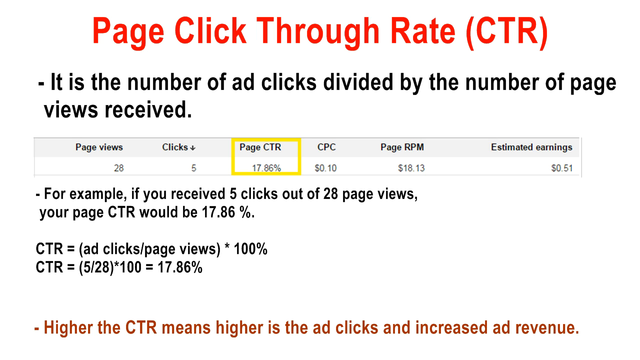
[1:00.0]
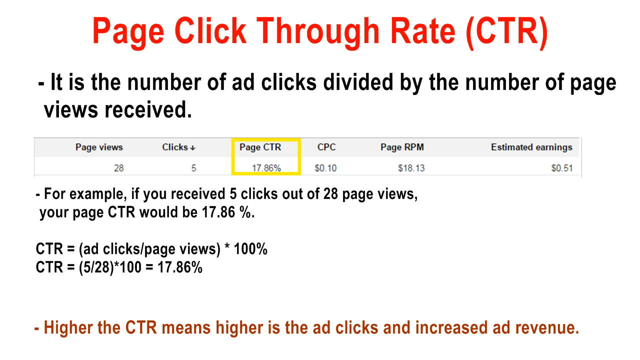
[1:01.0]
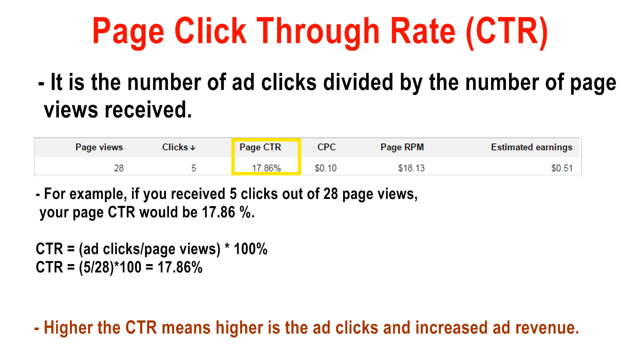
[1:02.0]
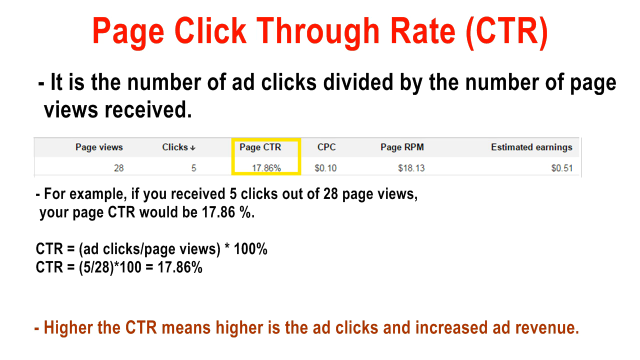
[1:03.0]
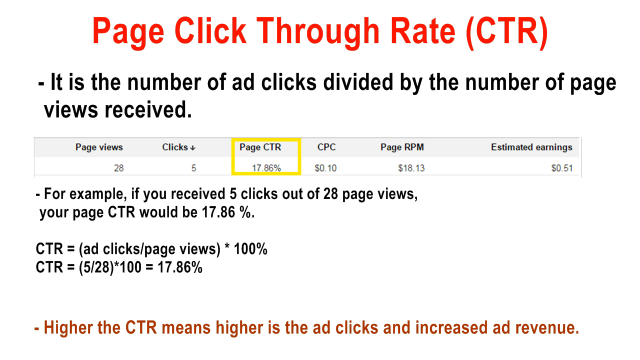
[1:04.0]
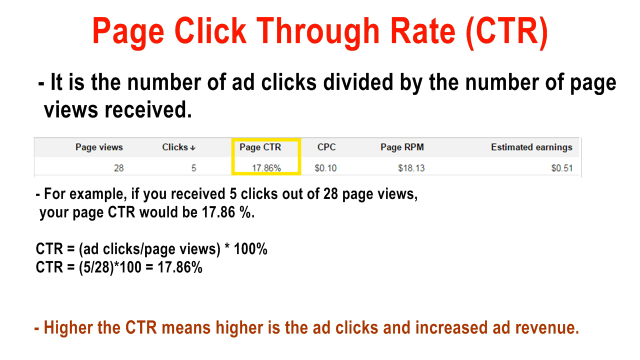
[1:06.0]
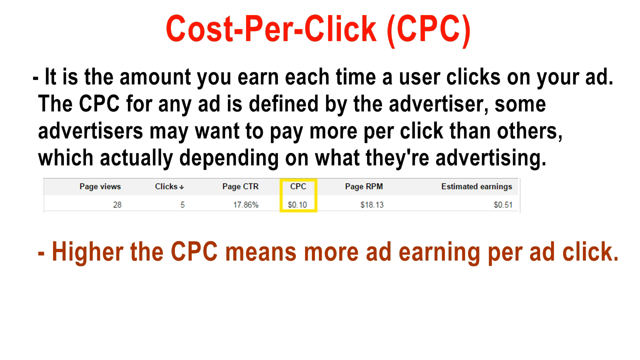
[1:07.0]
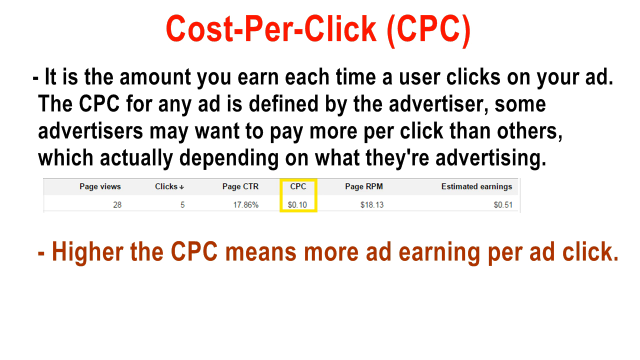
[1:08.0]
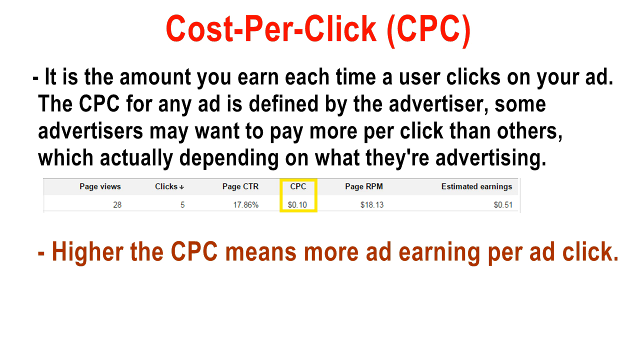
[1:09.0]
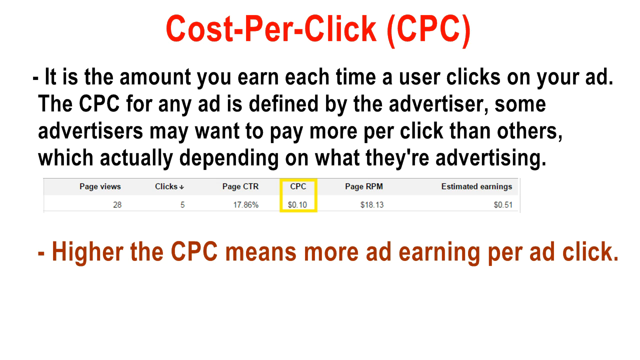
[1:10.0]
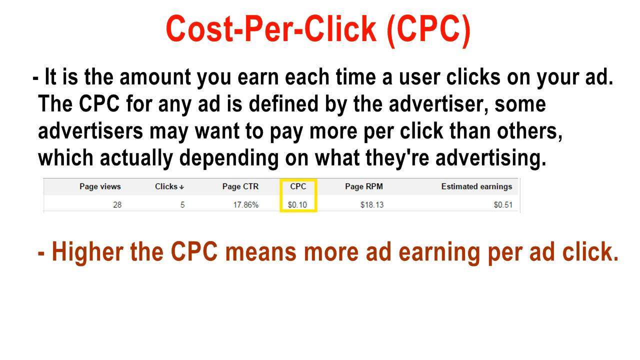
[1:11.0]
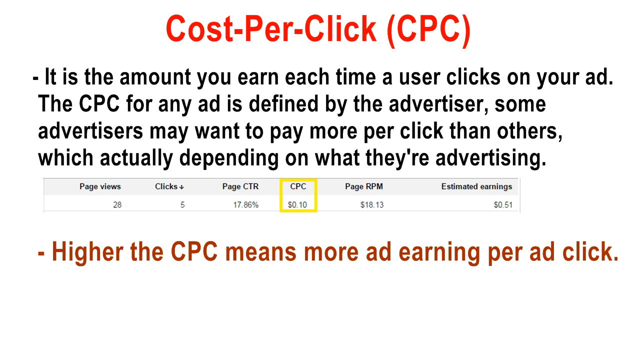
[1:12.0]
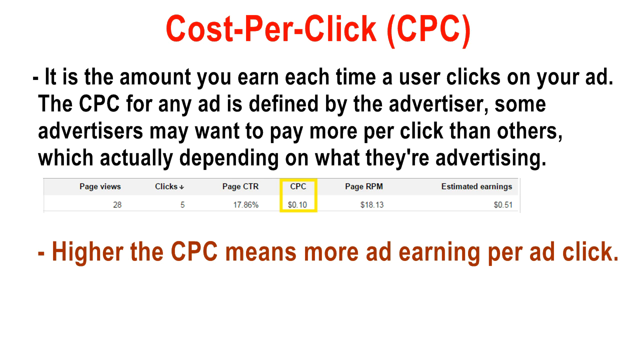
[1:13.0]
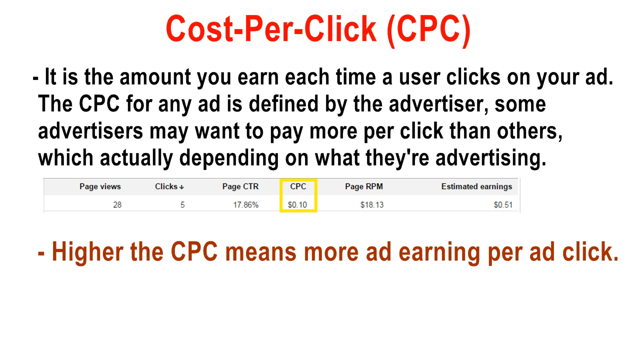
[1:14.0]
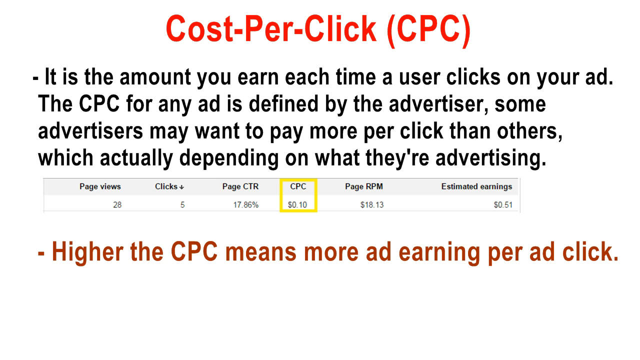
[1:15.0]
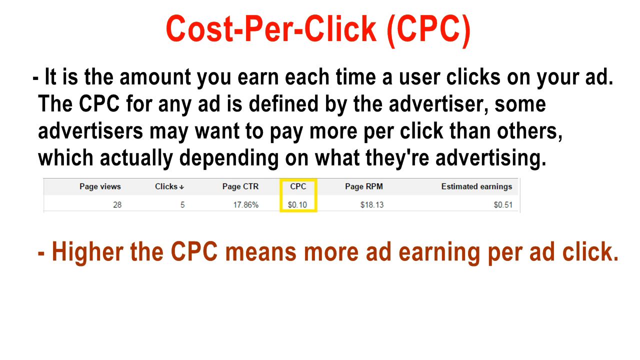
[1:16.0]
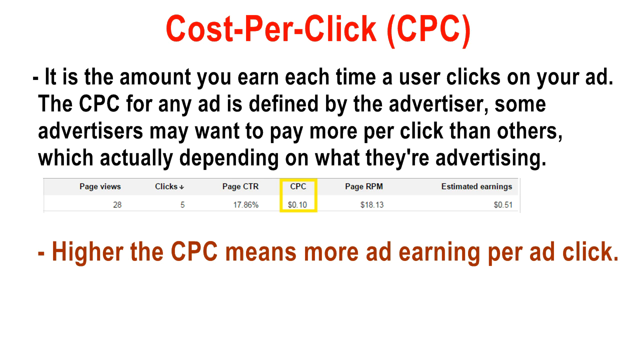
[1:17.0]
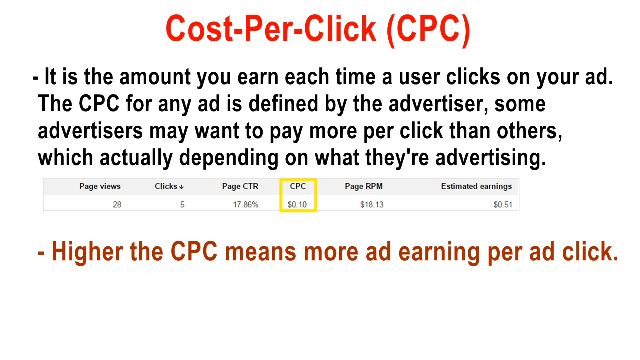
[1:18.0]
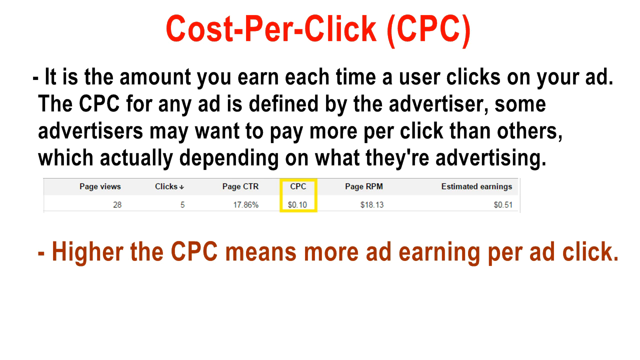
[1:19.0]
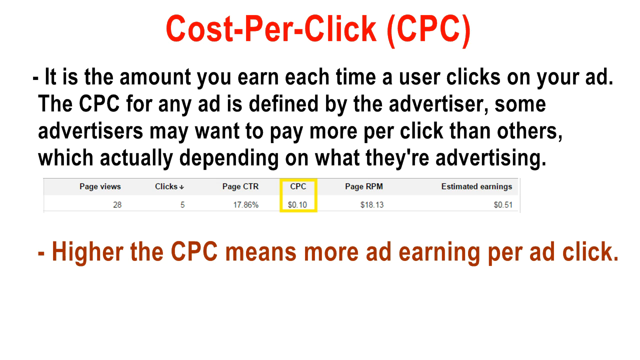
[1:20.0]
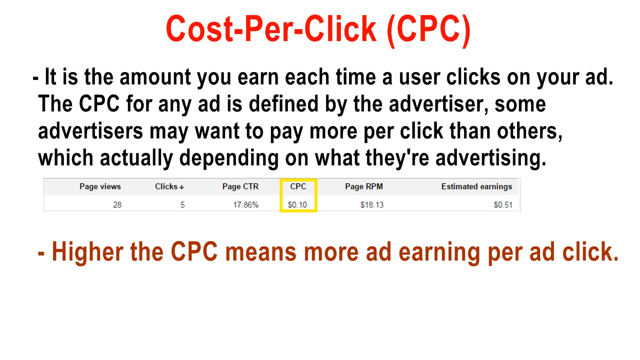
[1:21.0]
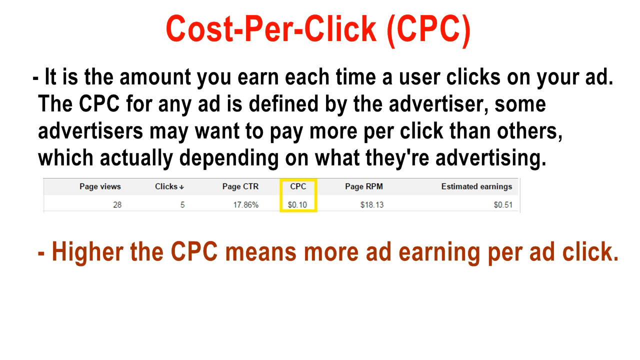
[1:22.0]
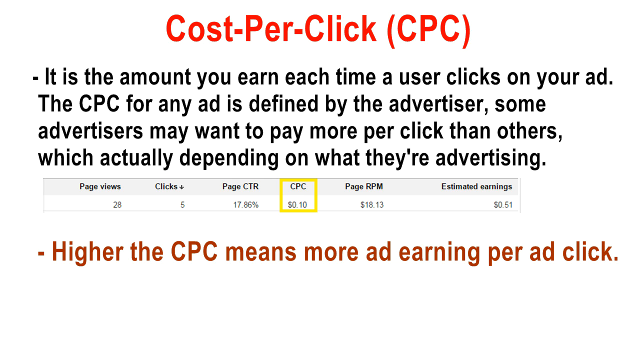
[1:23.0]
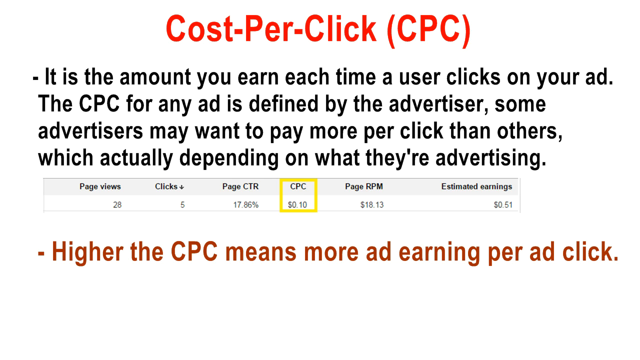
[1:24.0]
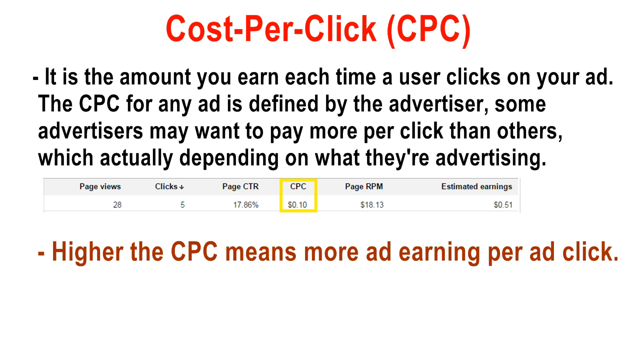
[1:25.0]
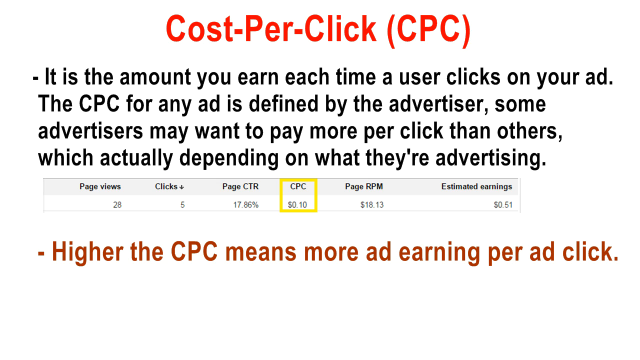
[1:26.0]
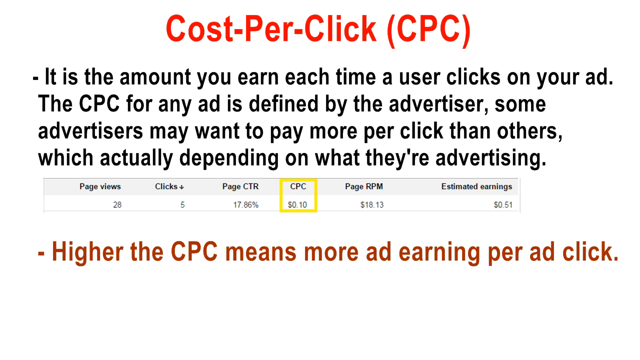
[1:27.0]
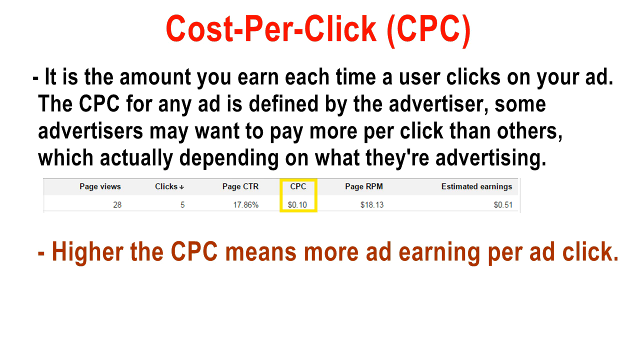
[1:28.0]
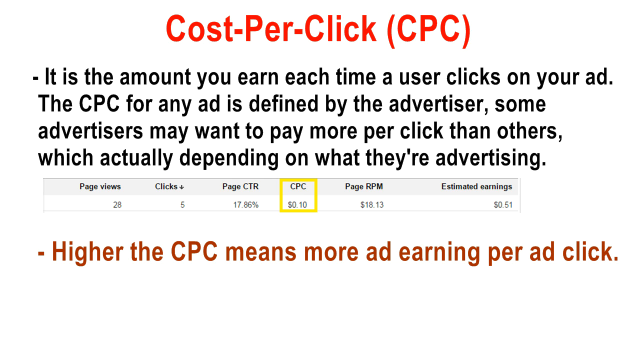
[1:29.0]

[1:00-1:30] The screen shows the page click-through rate, then moves to cost per click (CPC), with the heading "cost per click" in red lettering. The text explains that this is the amount earned each time a user clicks on an ad, that the CPC for any ad is defined by the advertiser, and that some advertisers may want to pay more per click than others depending on what they are advertising. In the example, the CPC is 0.10. The page states that a higher CPC means more ad earning per click.